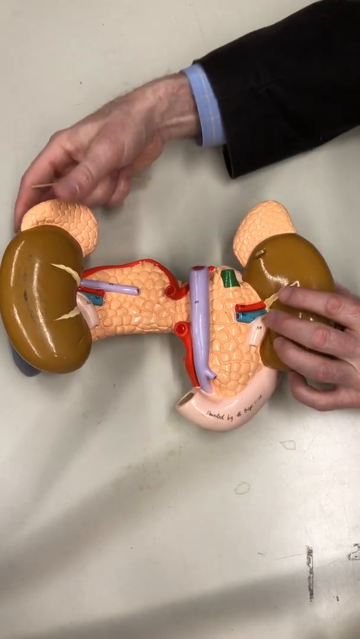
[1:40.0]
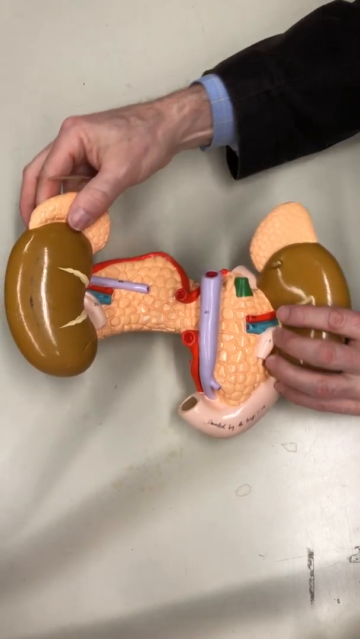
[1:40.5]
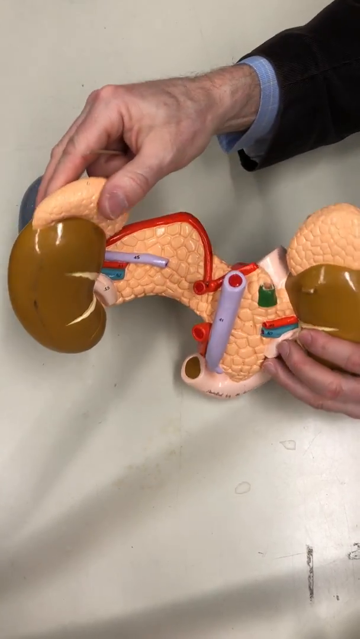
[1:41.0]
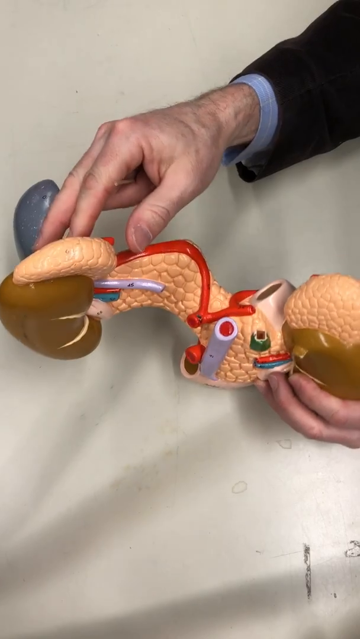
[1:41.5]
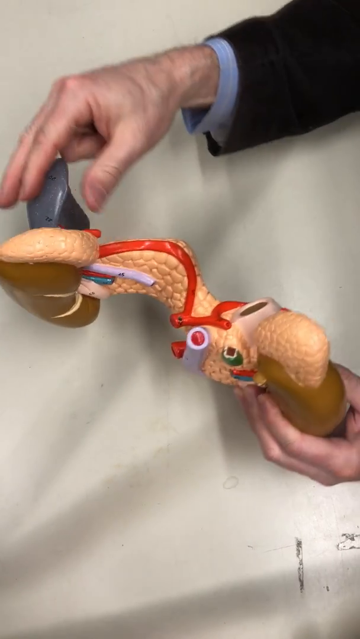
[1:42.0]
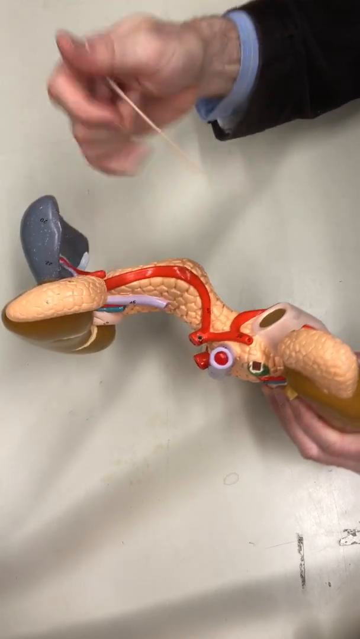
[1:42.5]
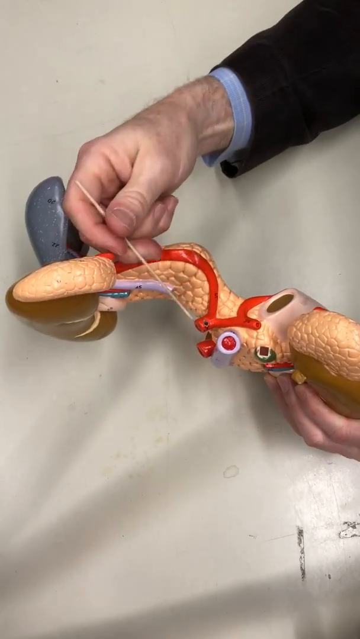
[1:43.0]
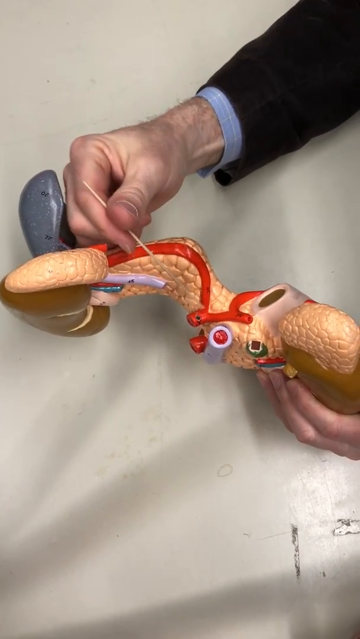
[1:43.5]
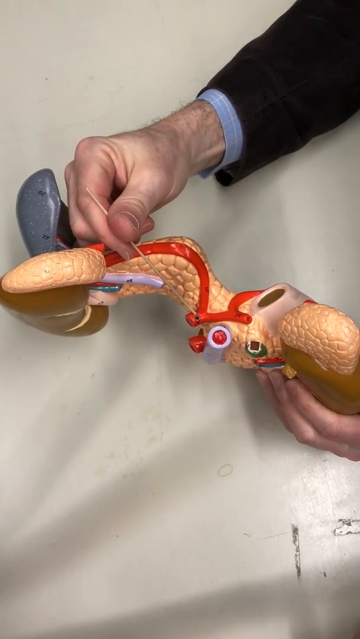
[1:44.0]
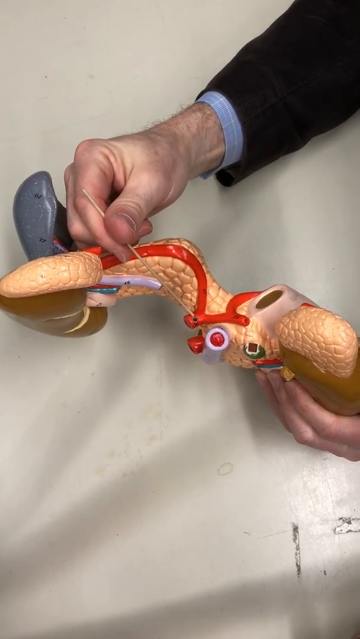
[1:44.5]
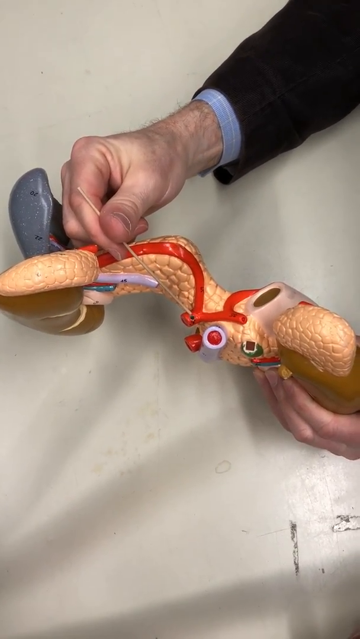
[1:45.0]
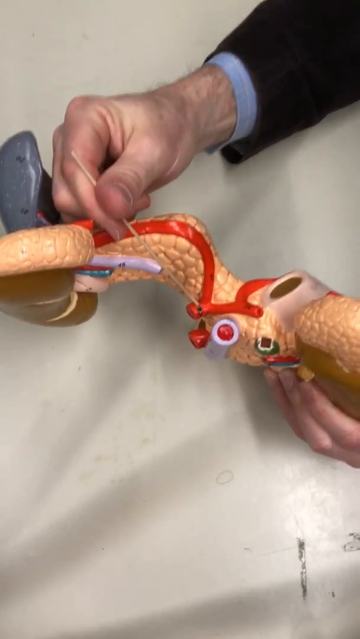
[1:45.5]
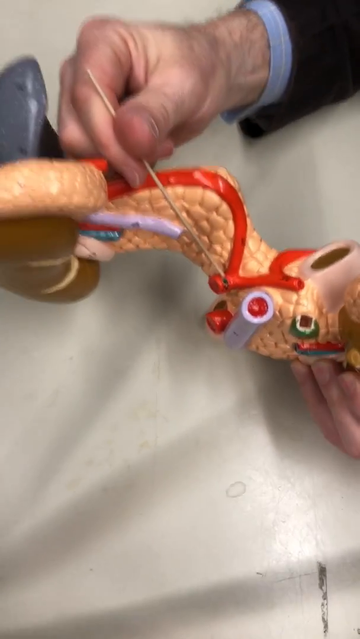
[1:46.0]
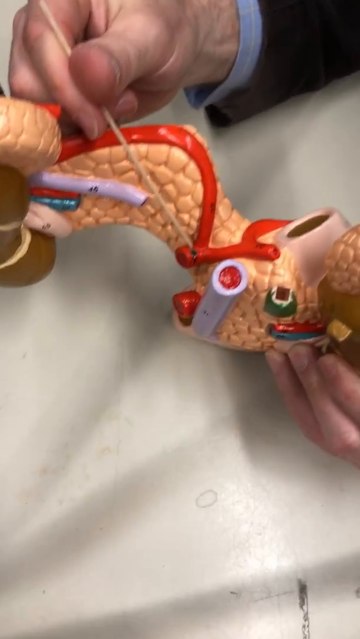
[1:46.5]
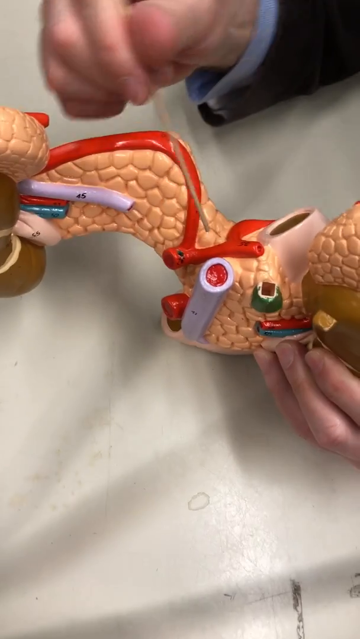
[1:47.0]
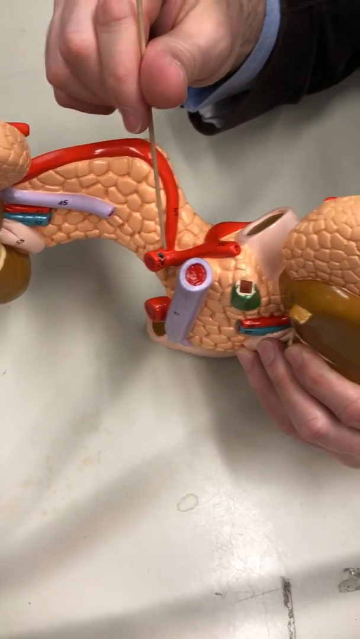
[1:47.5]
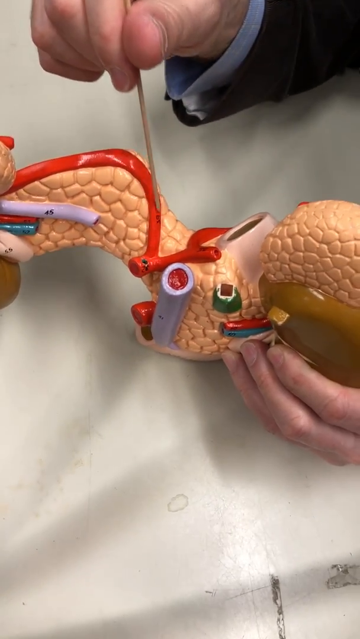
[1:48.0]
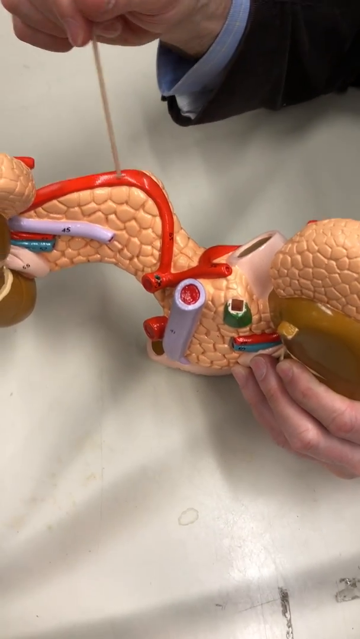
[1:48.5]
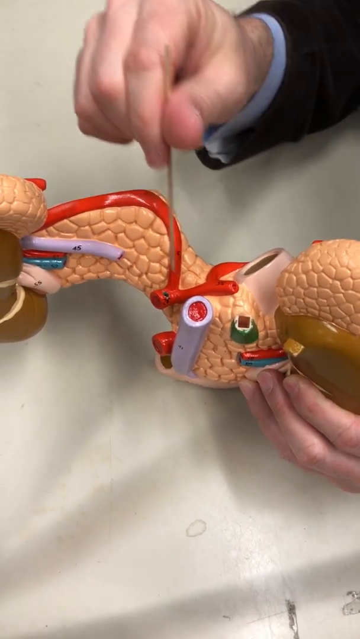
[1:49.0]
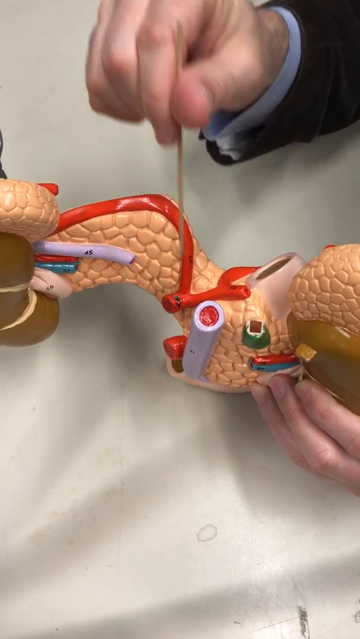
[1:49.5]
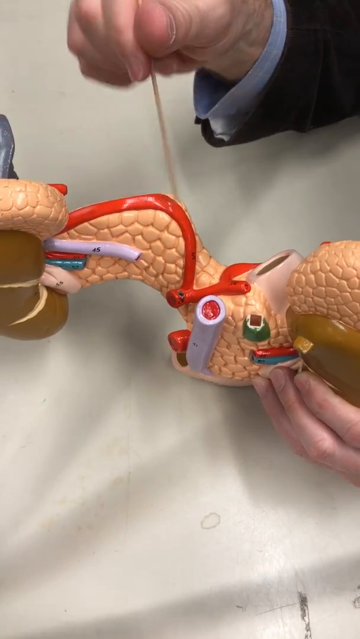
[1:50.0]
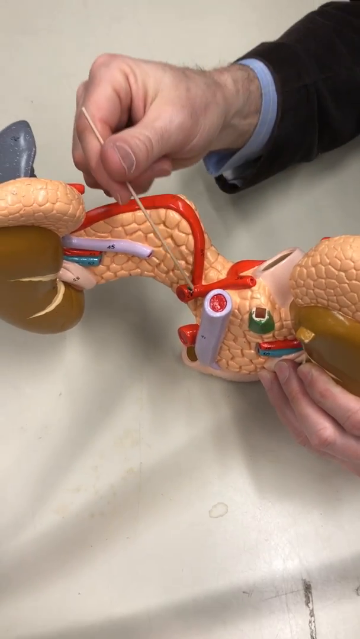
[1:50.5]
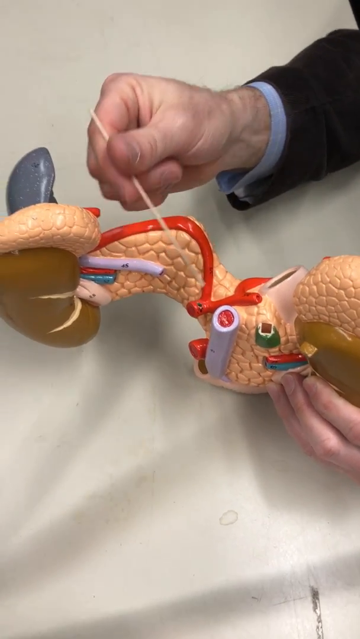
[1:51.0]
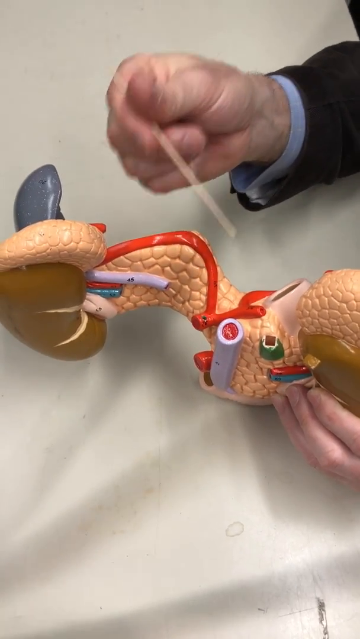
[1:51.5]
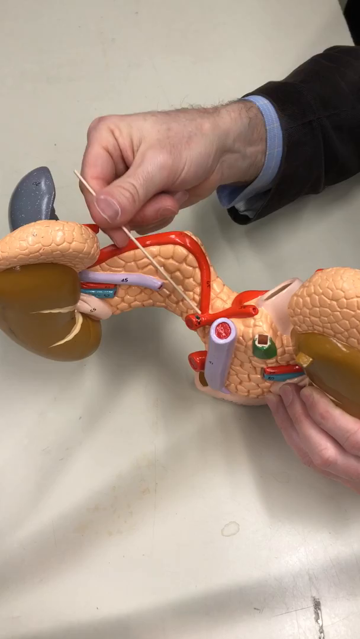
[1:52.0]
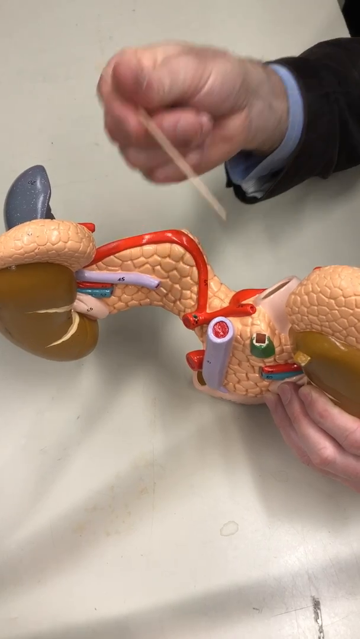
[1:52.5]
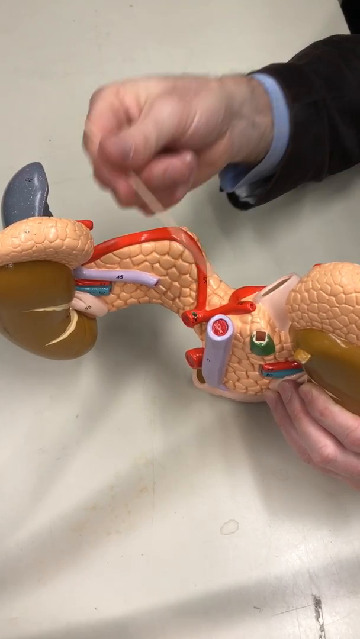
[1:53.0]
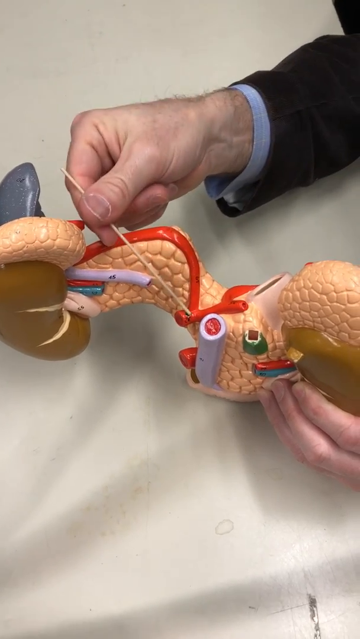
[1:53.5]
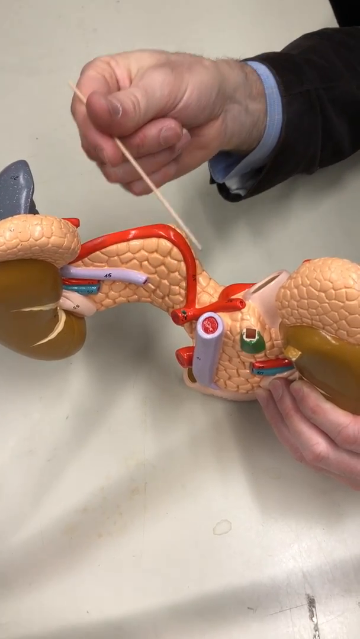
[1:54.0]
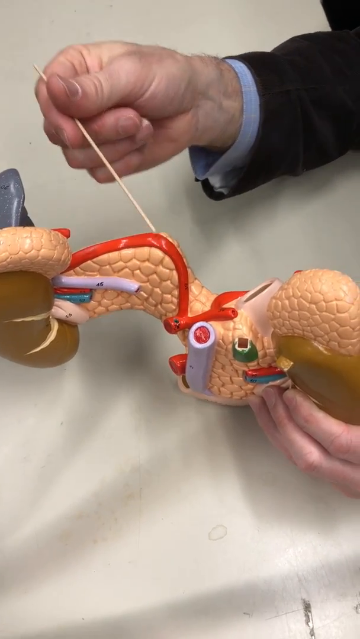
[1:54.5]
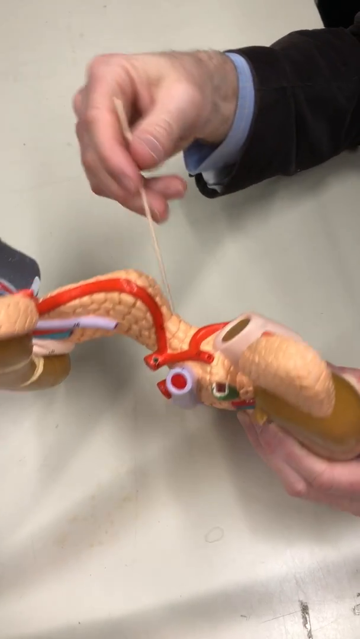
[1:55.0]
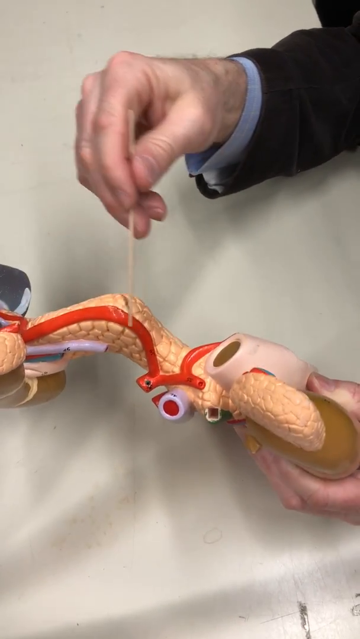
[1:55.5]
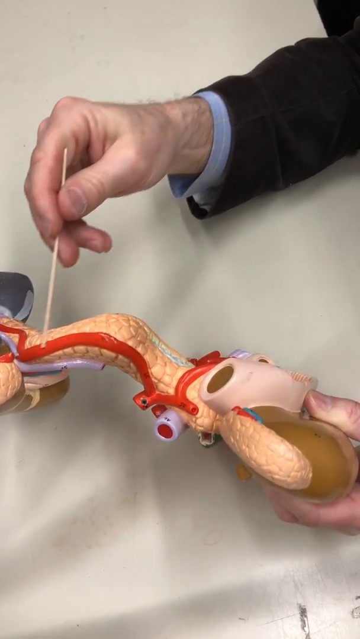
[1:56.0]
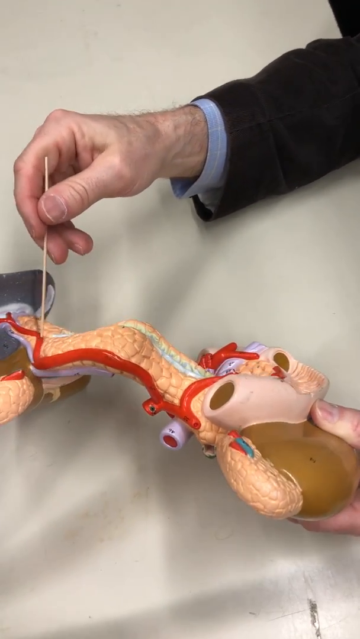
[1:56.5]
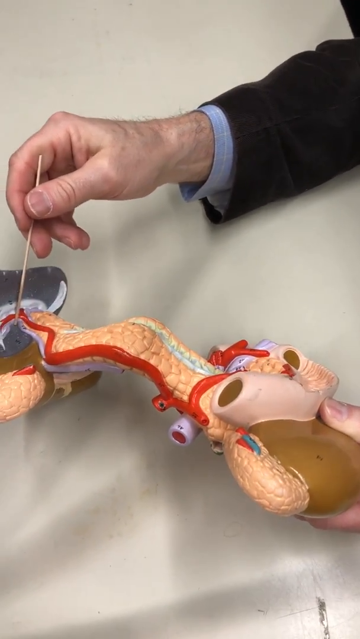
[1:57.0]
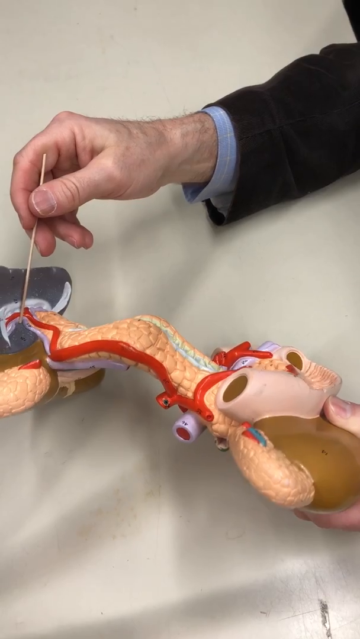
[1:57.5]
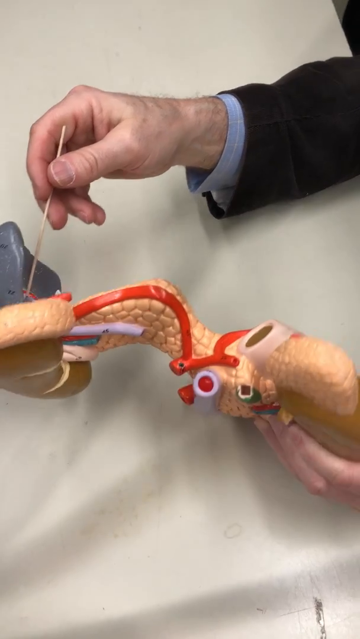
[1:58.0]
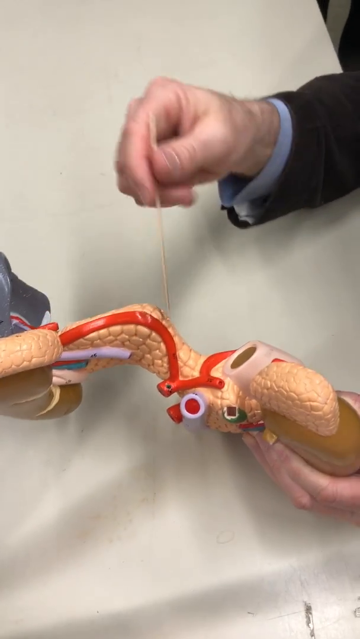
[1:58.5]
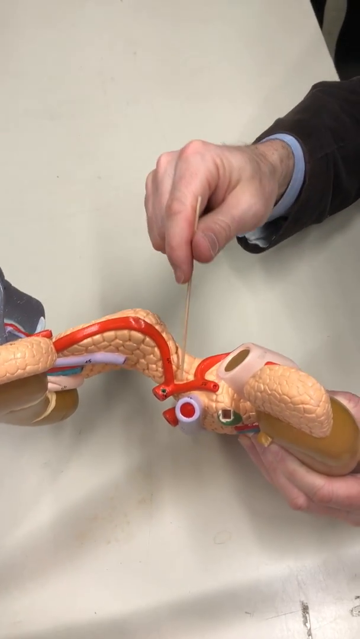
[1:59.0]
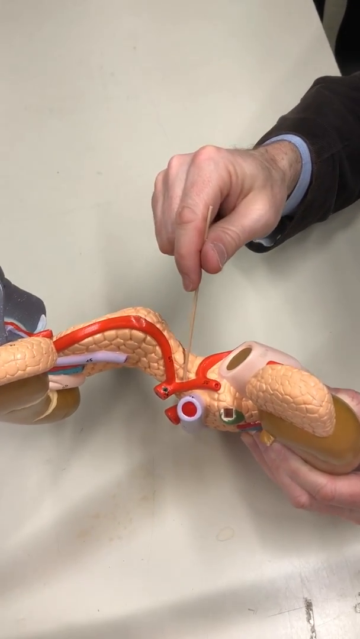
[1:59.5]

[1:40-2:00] The object looks like a toy, like a toy motor or a robot. Both hands rotate and turn it around, showing a red valve running up and down, crossing over to the other side, and how far it can go; it apparently has different types of movements. The model is made with different colors: the bigger part is yellow, a liver-like part is brownish, and there are purple valves and red valves.